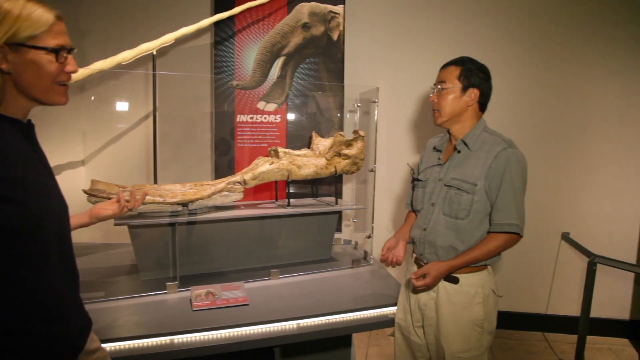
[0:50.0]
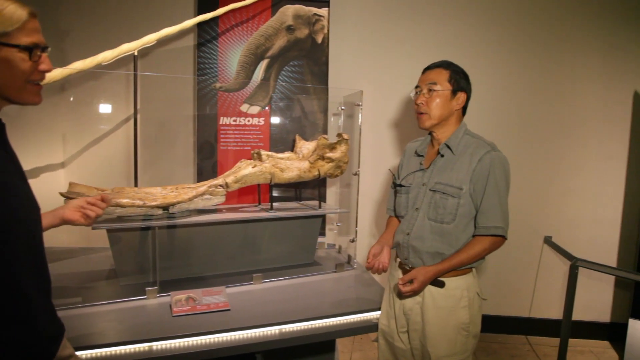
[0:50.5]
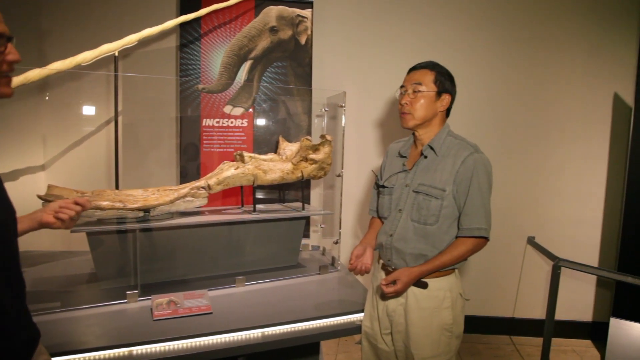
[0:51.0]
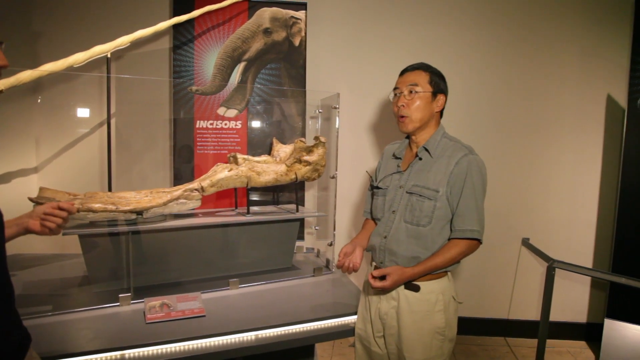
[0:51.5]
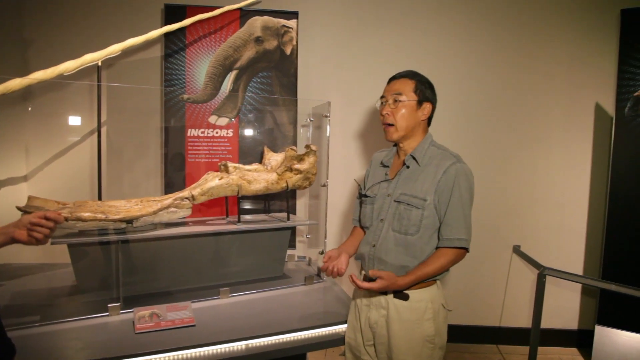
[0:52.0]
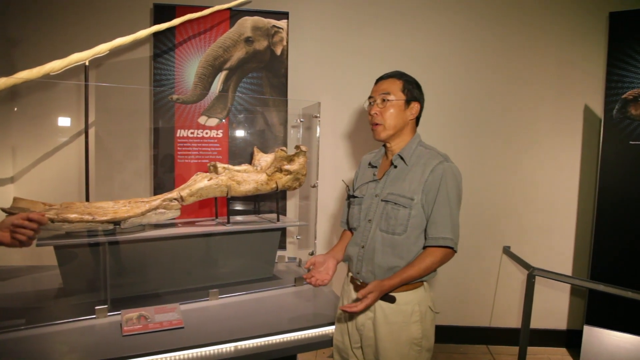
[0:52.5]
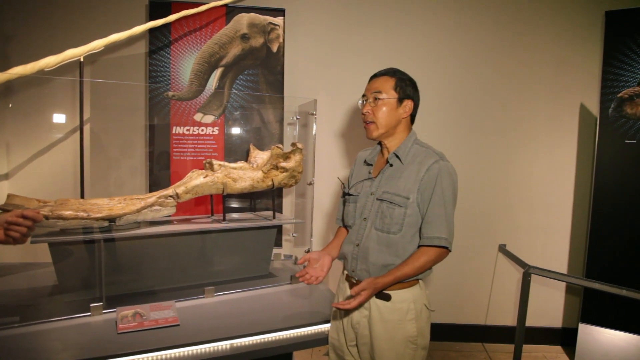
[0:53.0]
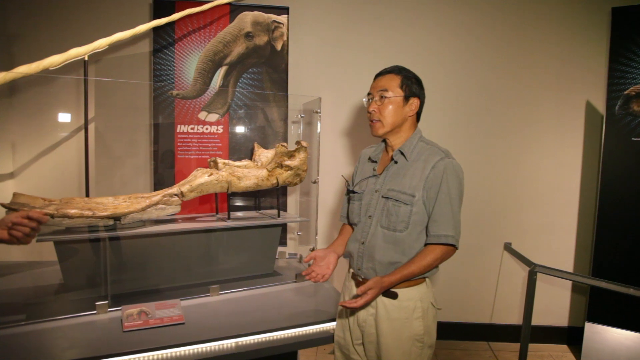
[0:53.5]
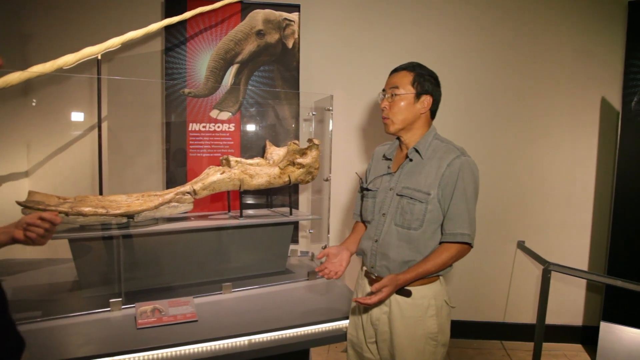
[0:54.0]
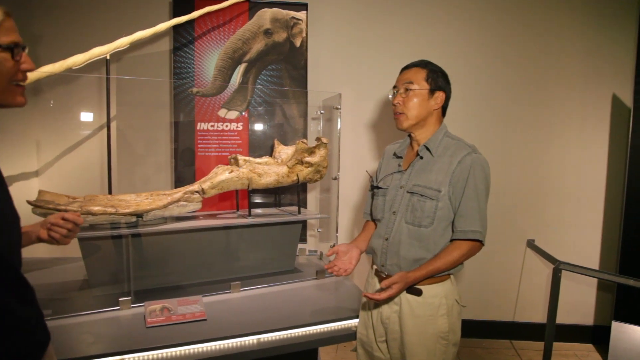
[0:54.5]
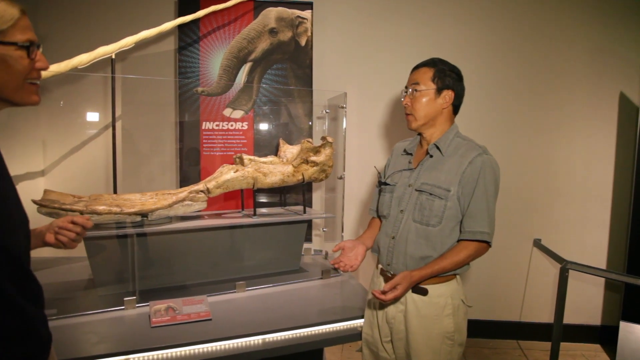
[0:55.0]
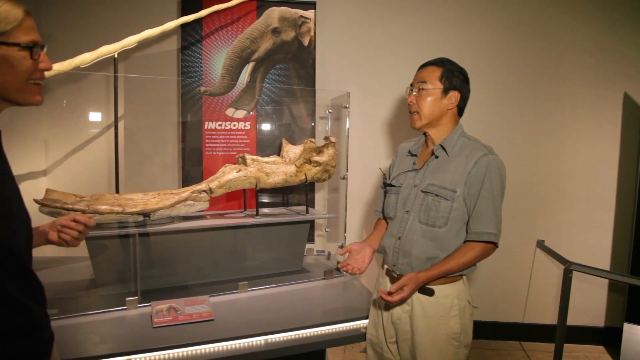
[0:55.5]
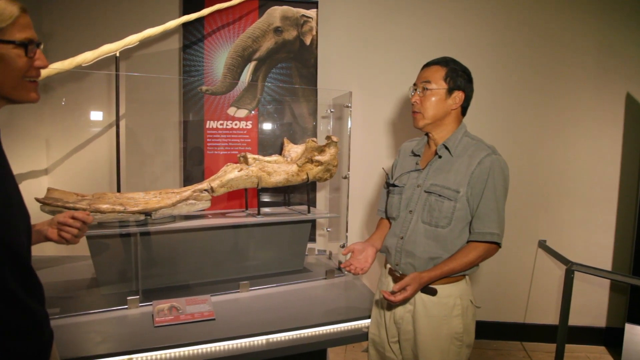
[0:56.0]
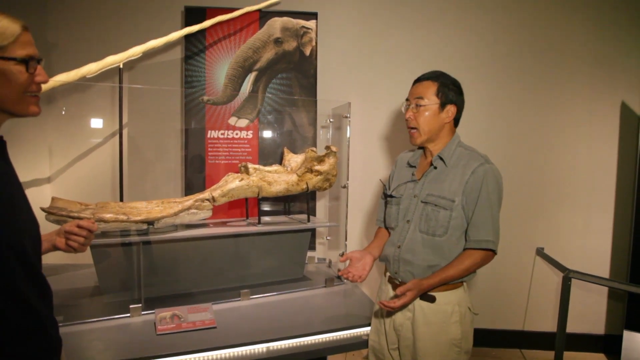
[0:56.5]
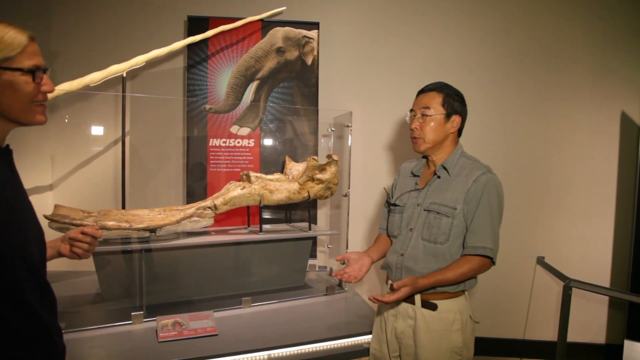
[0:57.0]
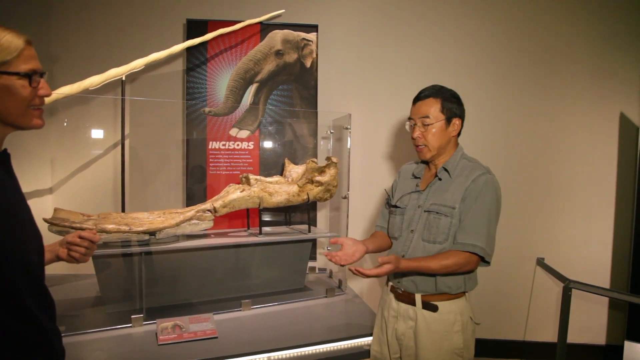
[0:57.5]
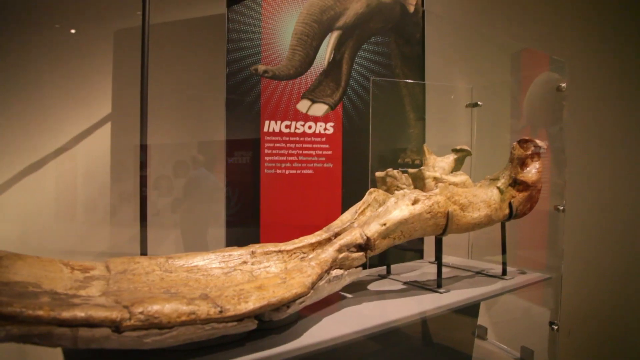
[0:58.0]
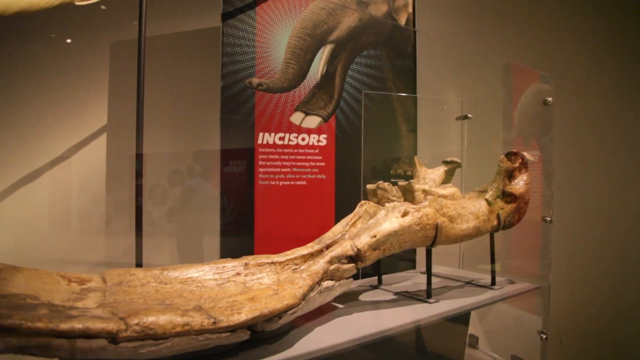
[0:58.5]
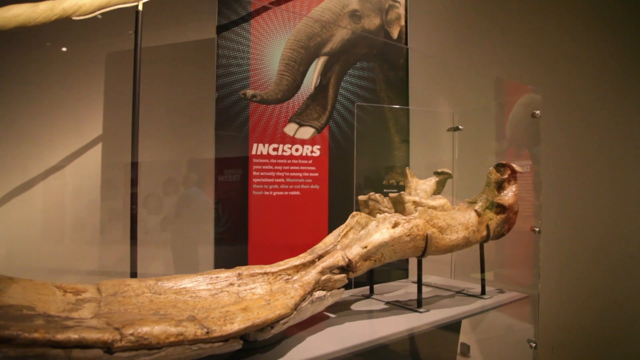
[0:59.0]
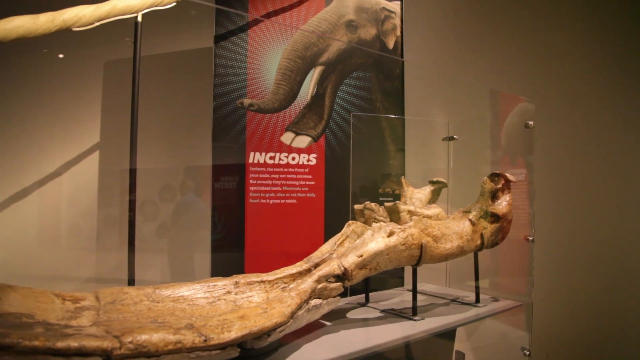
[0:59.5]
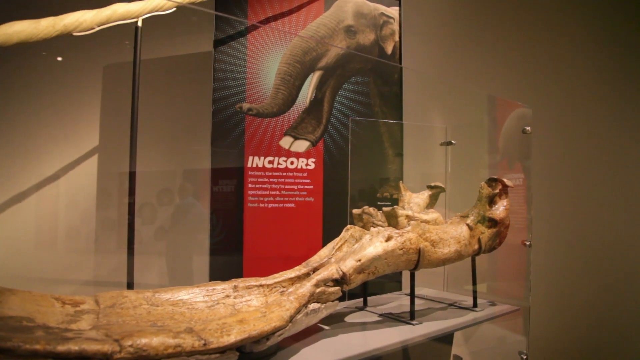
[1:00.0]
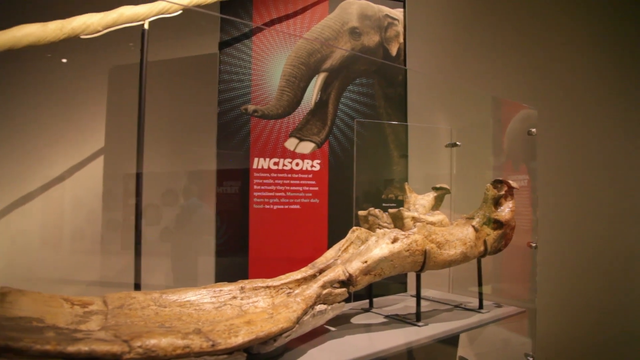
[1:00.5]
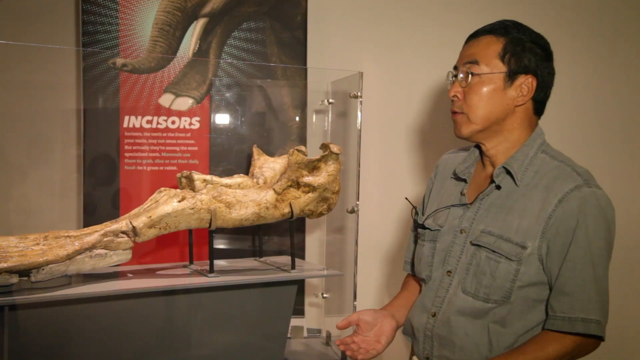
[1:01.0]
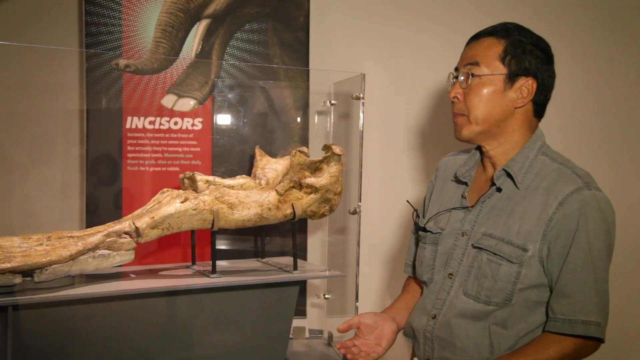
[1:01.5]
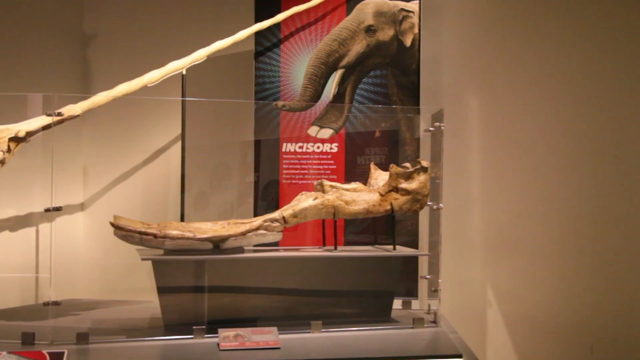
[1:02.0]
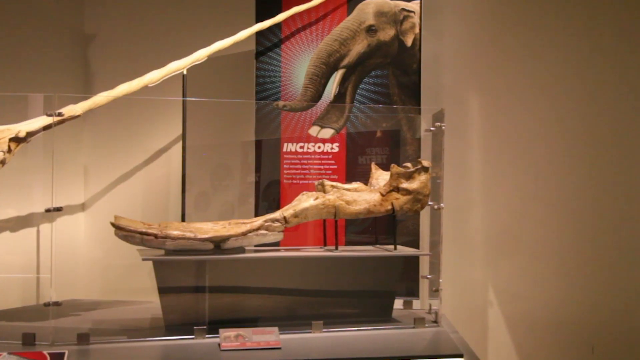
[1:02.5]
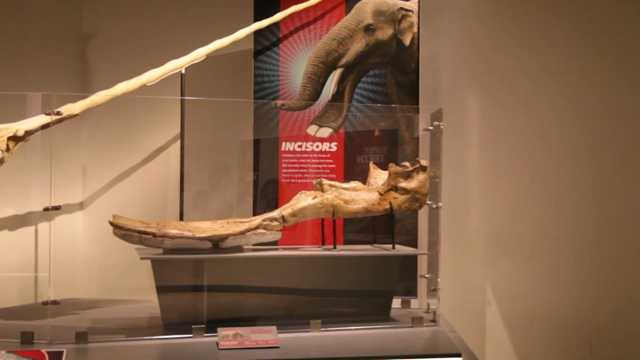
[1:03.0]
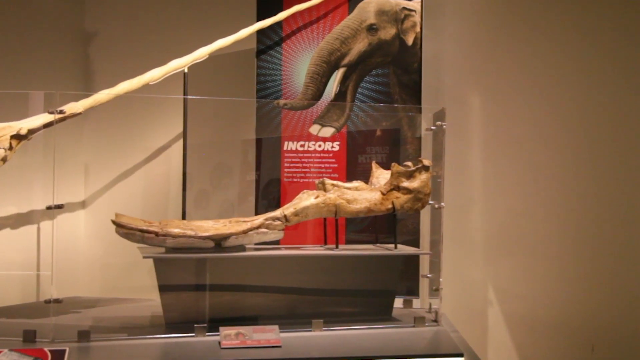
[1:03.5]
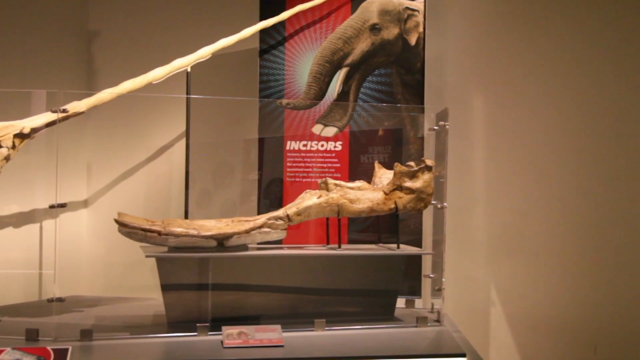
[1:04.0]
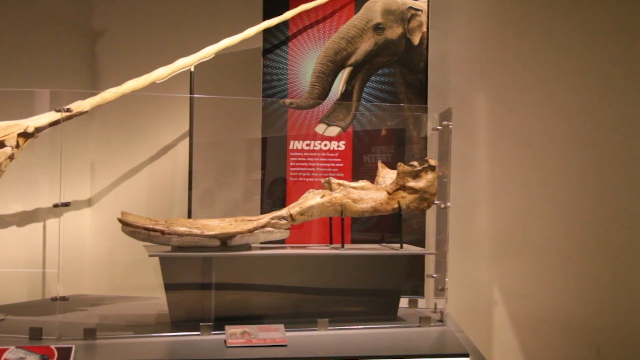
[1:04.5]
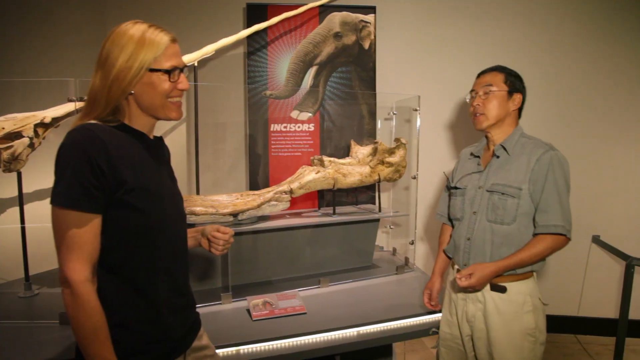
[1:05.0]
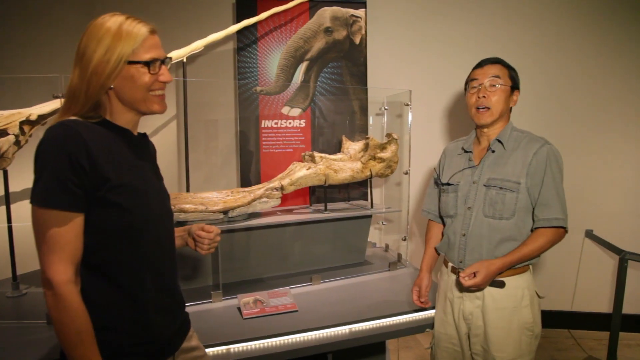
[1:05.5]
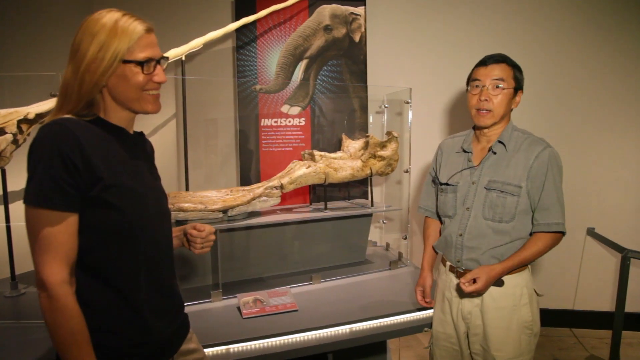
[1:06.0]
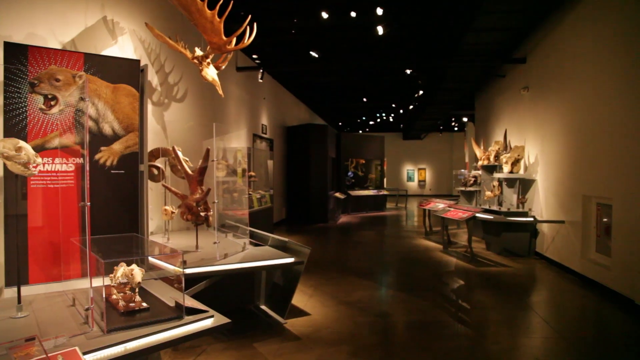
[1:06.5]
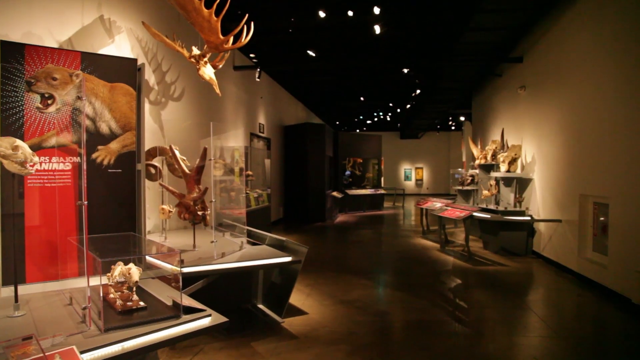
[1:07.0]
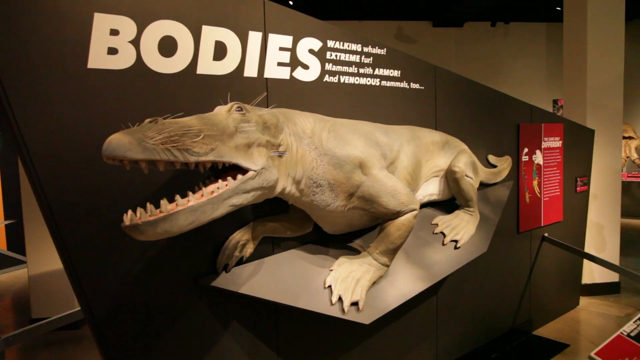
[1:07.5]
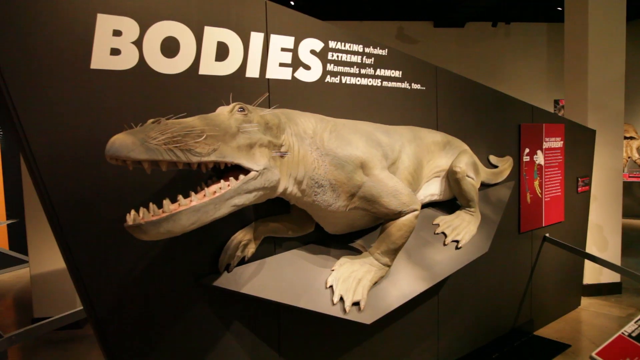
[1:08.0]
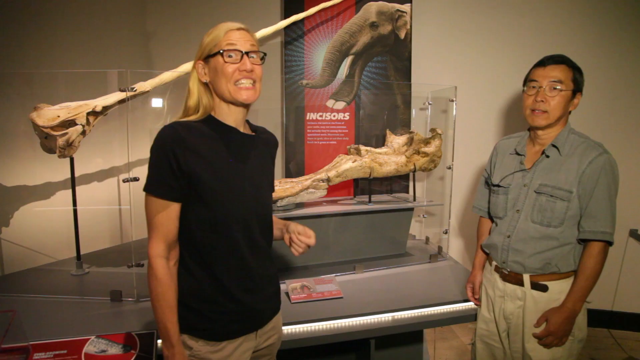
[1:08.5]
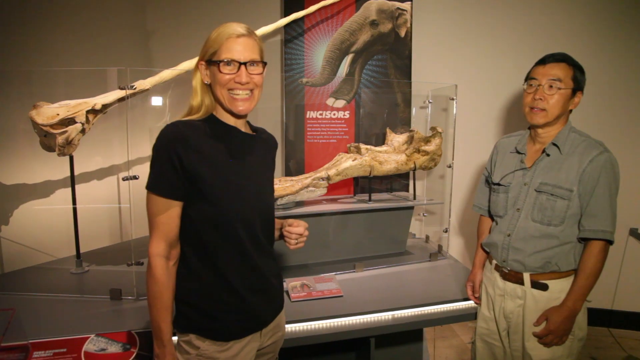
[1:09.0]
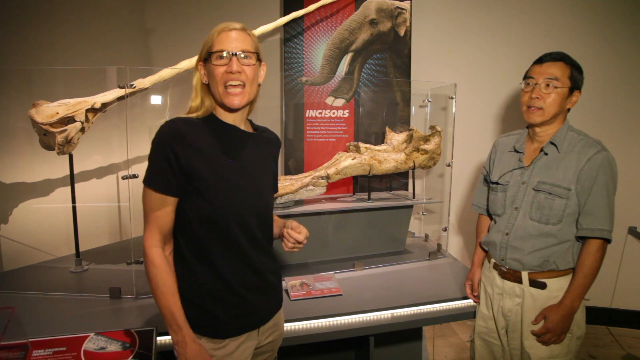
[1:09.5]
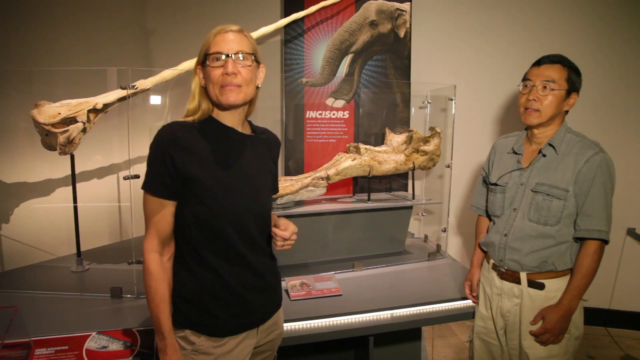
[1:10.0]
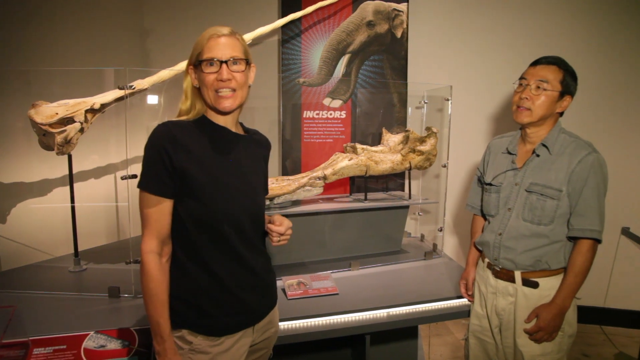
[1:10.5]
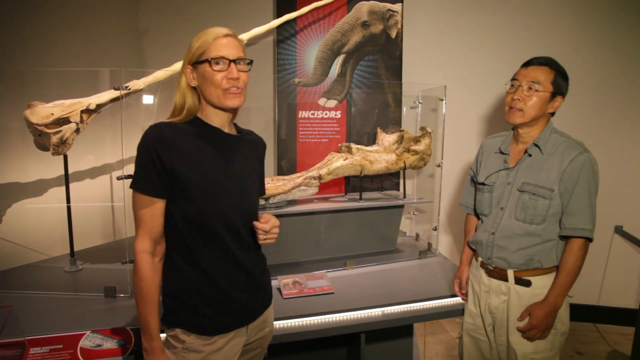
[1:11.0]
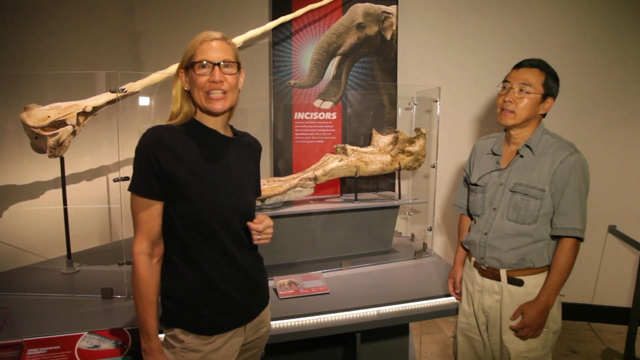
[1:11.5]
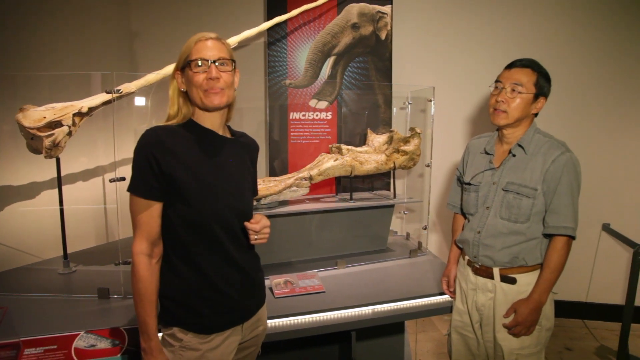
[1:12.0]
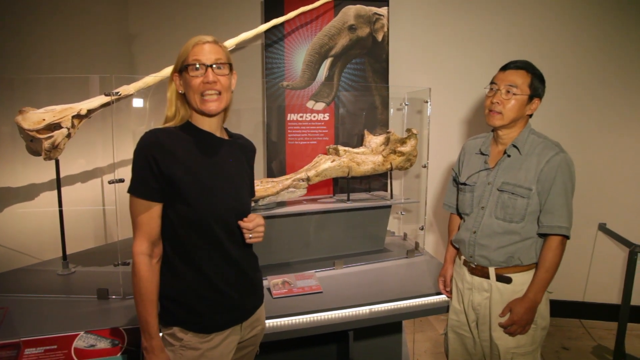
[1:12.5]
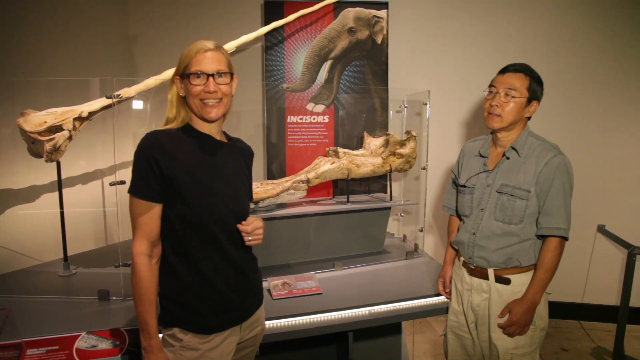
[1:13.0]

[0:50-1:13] A woman with blonde hair and black-framed glasses, wearing a black short-sleeved shirt, is on the far left of the screen with her left arm held out a little way. She stands opposite a man on the other side of the frame who has dark hair, dark eyebrows, and clear-framed glasses, and wears khaki pants with a brown belt and a grayish button-up shirt that looks kind of like a cargo shirt. They are standing in front of a display of bones; behind the bones is a display showing an elephant-looking creature with "in scissors" written underneath it. The man and woman talk to each other as the camera switches back and forth between them and the two bones on the display. The display of bones looks like it is surrounded by some kind of plexiglass or protection.